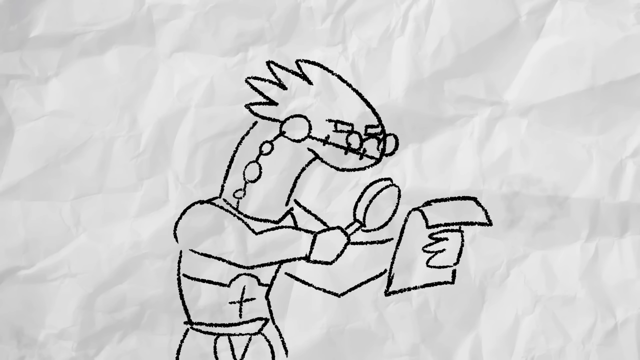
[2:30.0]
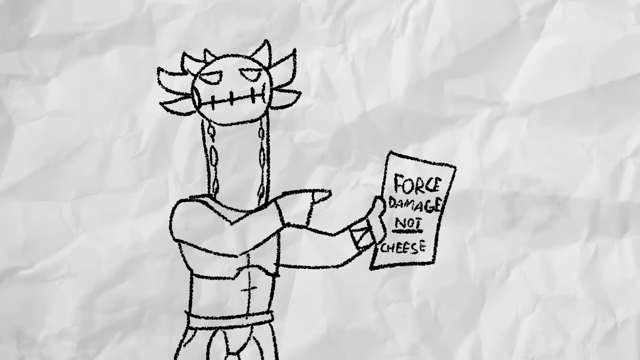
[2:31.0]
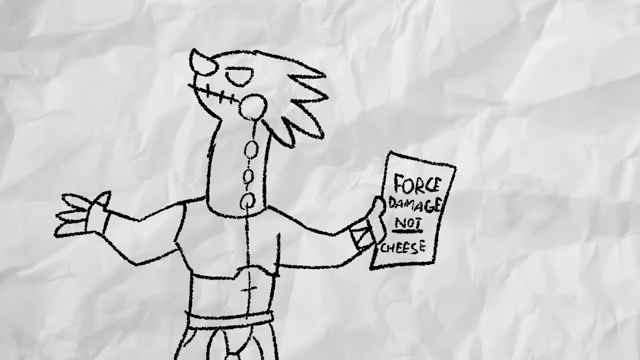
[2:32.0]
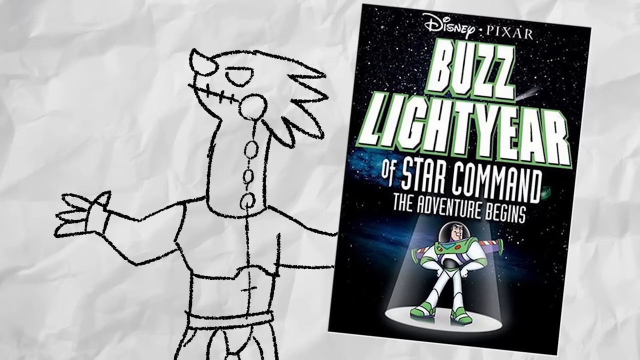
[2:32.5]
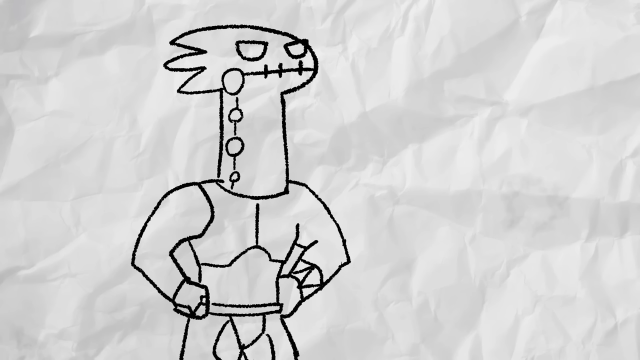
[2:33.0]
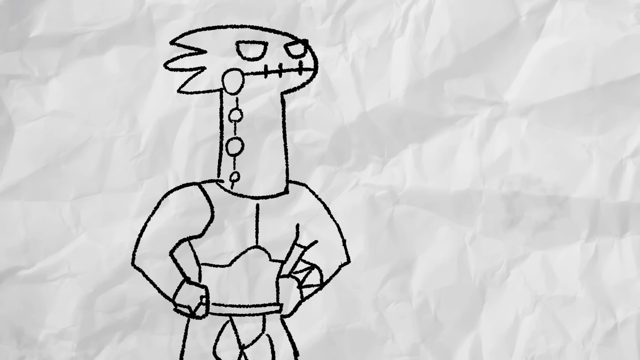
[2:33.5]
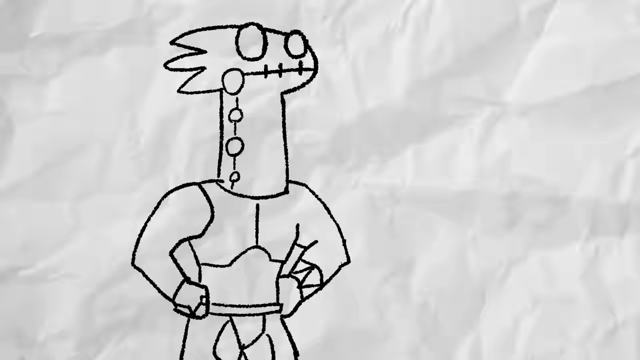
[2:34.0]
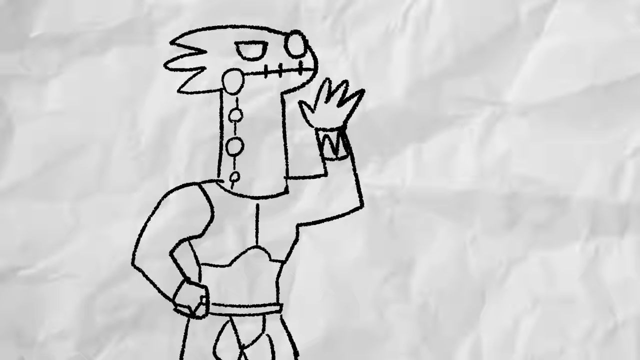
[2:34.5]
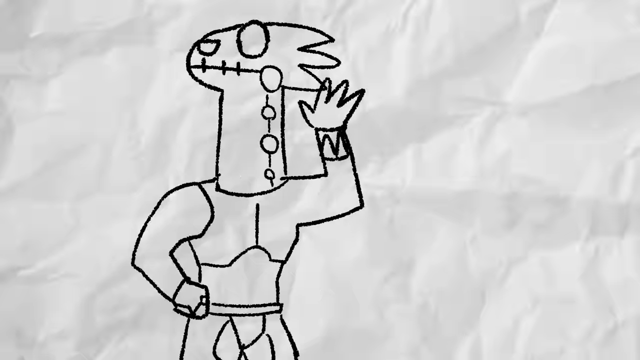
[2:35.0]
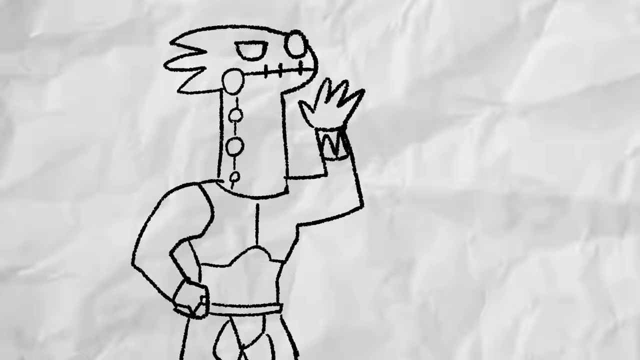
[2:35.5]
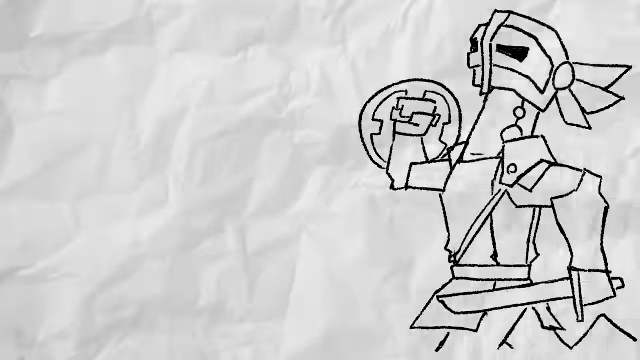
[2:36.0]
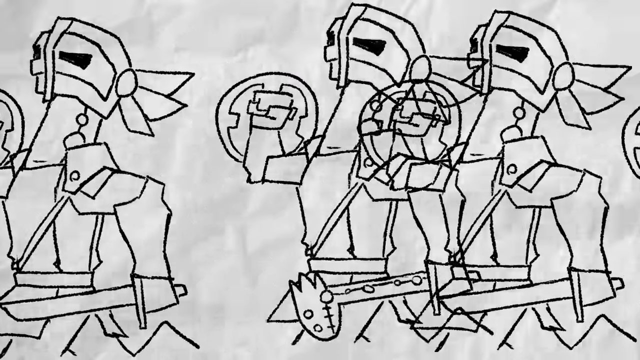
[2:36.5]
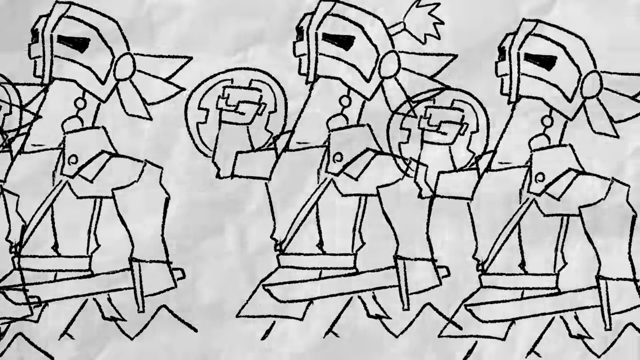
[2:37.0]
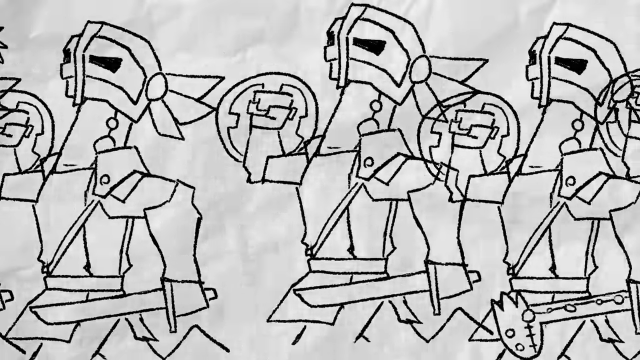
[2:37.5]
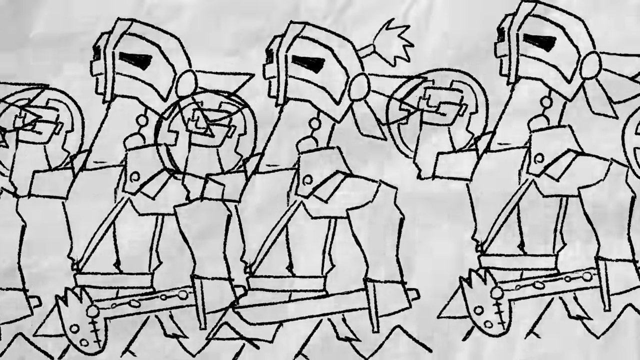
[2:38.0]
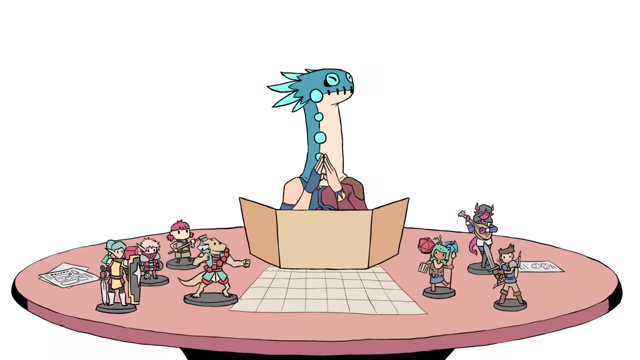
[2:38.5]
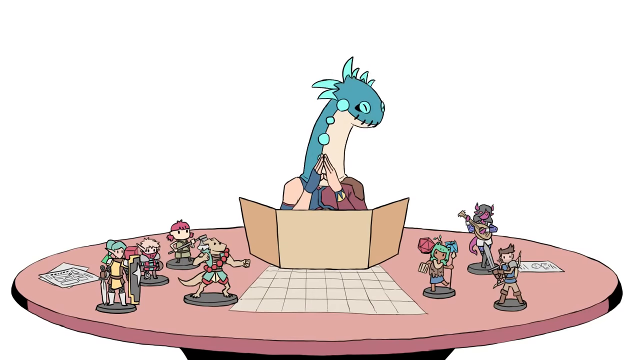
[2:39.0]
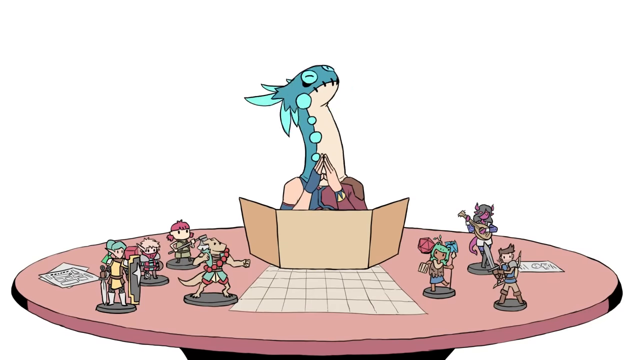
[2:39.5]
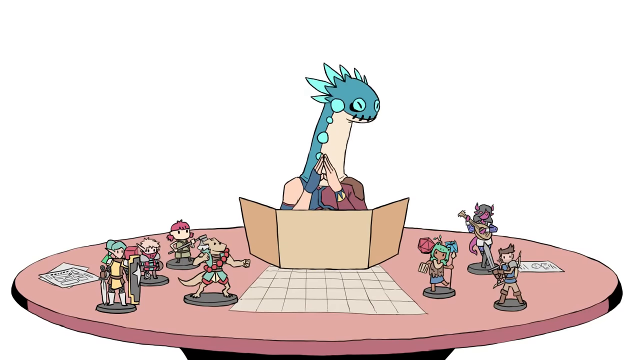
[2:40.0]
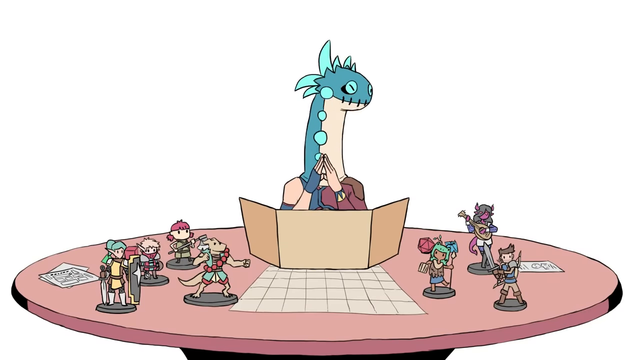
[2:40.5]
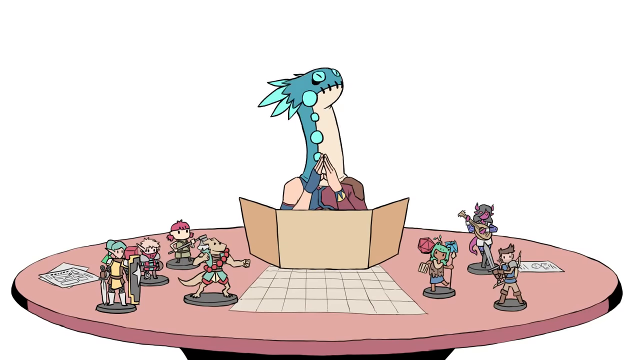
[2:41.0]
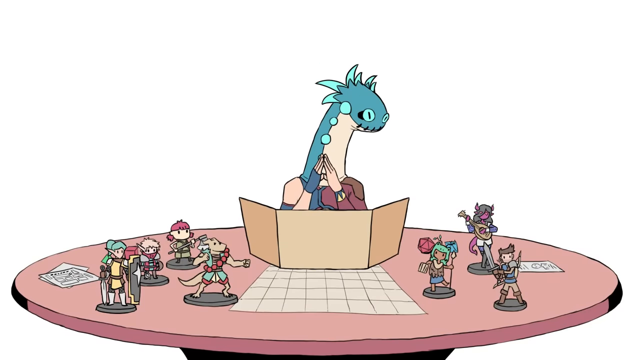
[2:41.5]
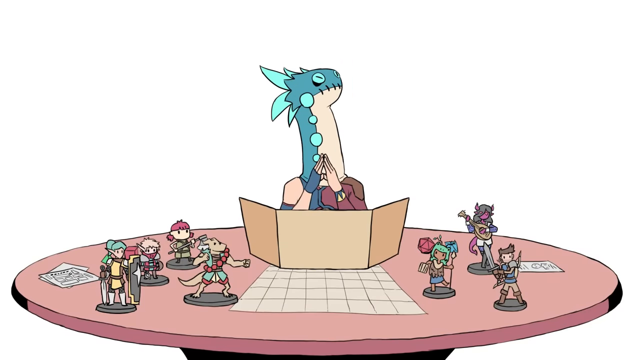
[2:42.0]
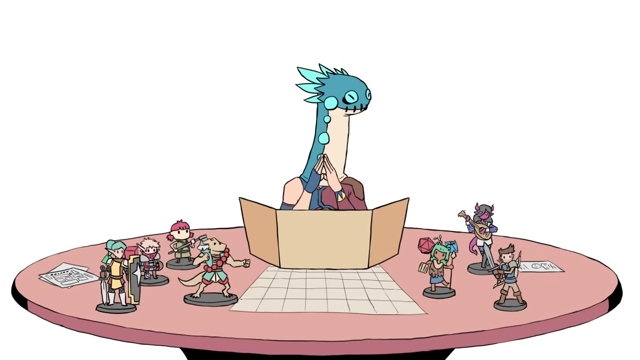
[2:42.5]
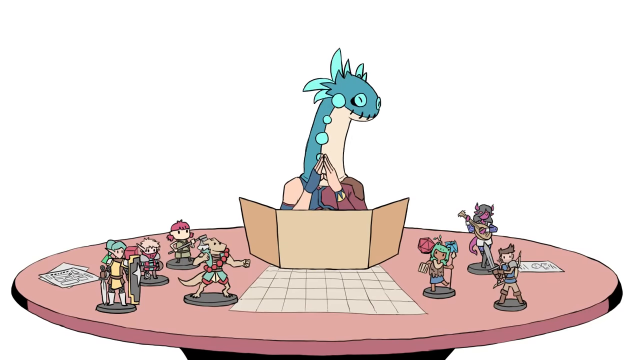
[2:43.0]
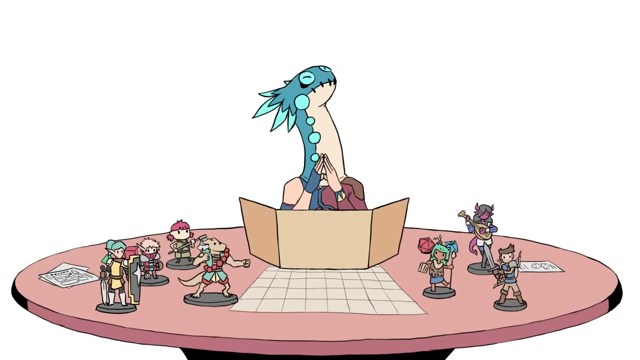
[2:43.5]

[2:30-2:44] A dinosaur or some kind of creature wearing a pair of glasses holds a magnifying glass and looks over a piece of paper in his hand. He points at it and shows it to the viewer; it says "forced damage, not cheese," with "not" underlined. He moves his arm to the left and a picture appears of "Disney Pixar Buzz Lightyear of Star Command, The Adventure Begins." The character puts his hands on his hips again and blinks, then puts his hand up as if to say "do you hear that?" and turns his head before something sort of moves and jumps at him. A character with a sword, a shield and a bunch of armor comes in, followed by a whole bunch of them coming across the screen. The character then sits at a salmon pink circular table with a bunch of different action figures and some paper on it, moving his head sort of back and forth.